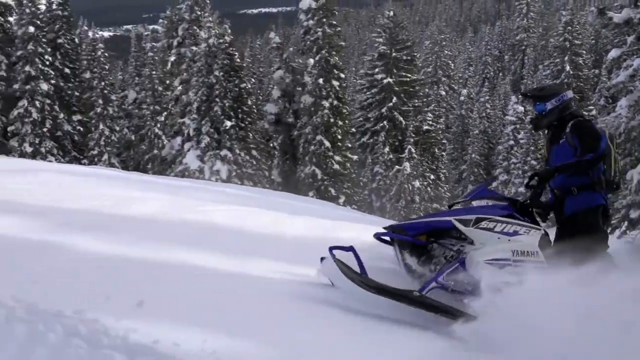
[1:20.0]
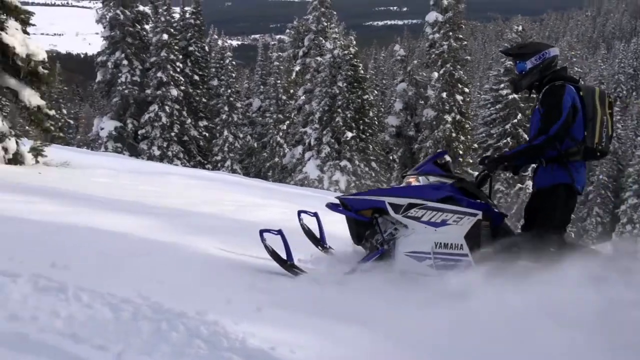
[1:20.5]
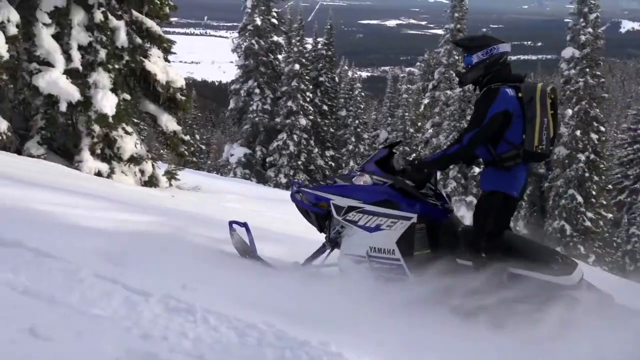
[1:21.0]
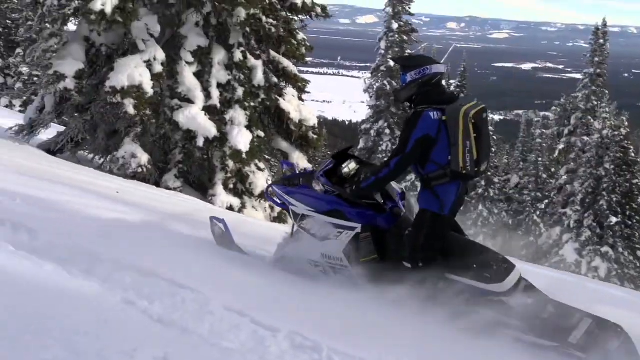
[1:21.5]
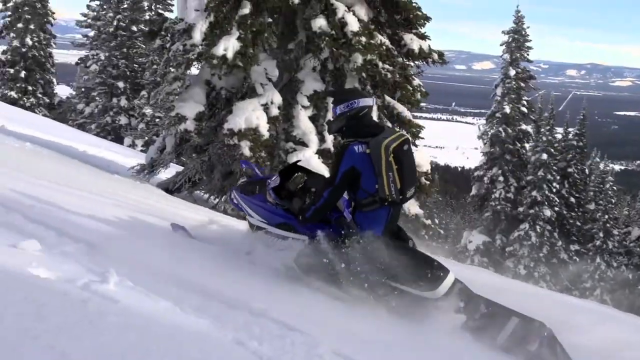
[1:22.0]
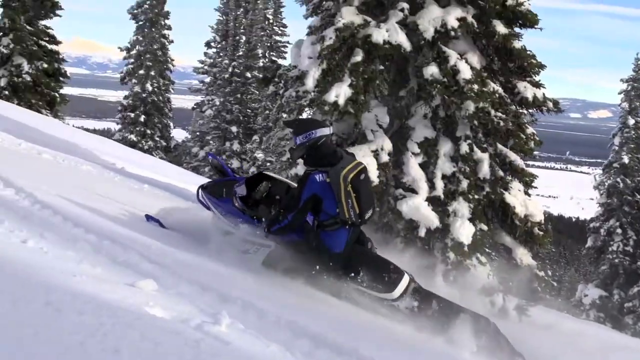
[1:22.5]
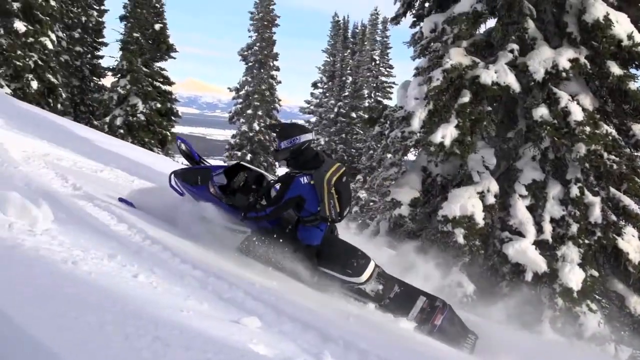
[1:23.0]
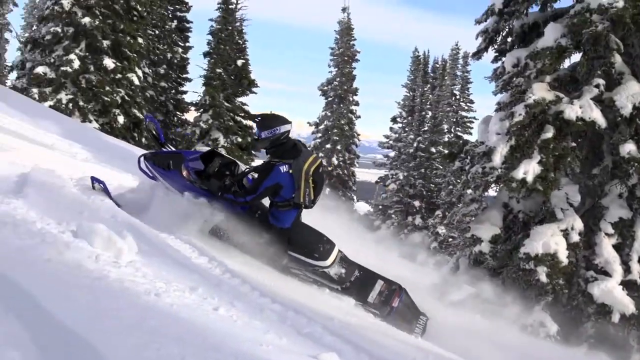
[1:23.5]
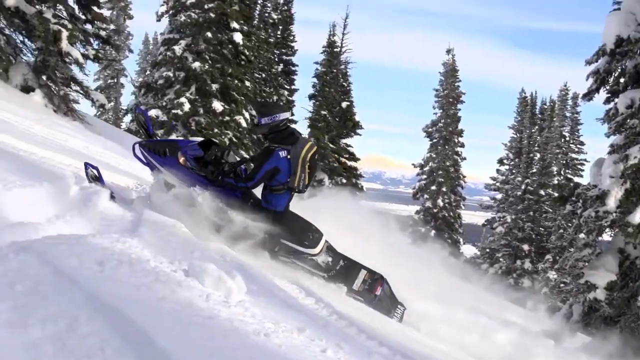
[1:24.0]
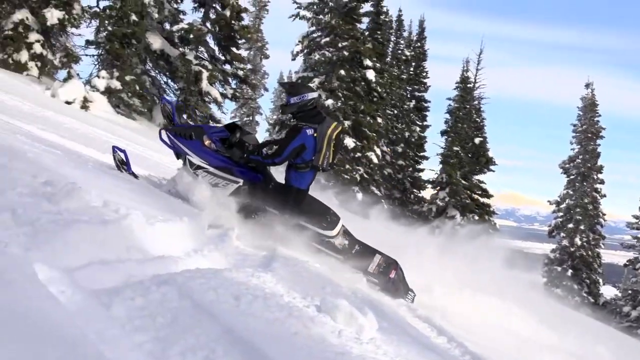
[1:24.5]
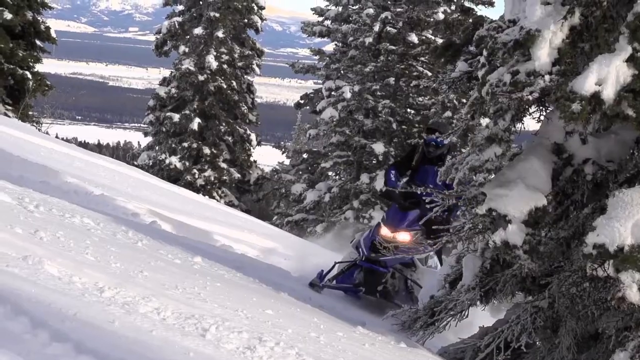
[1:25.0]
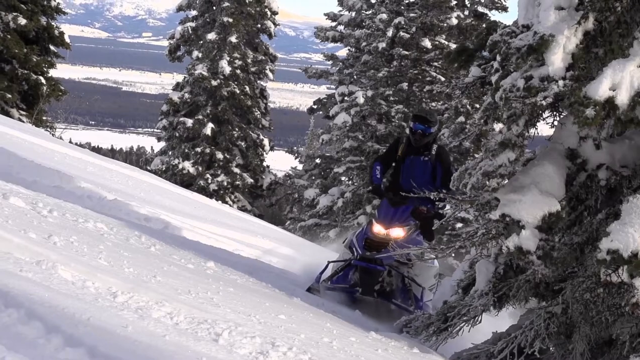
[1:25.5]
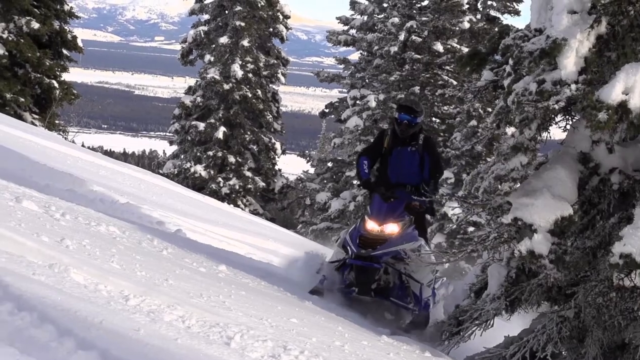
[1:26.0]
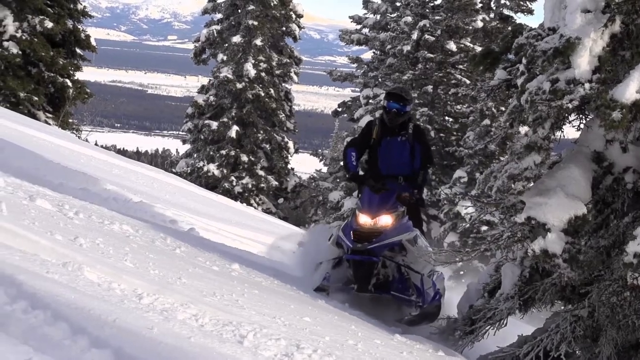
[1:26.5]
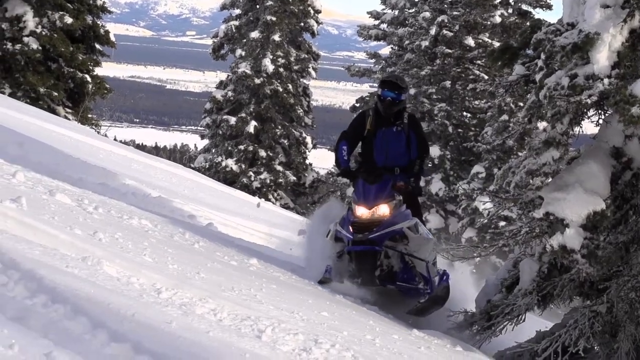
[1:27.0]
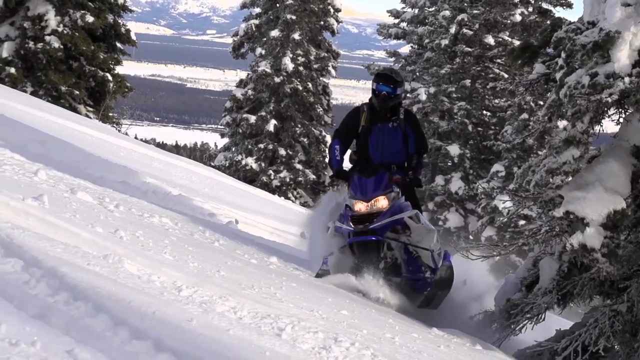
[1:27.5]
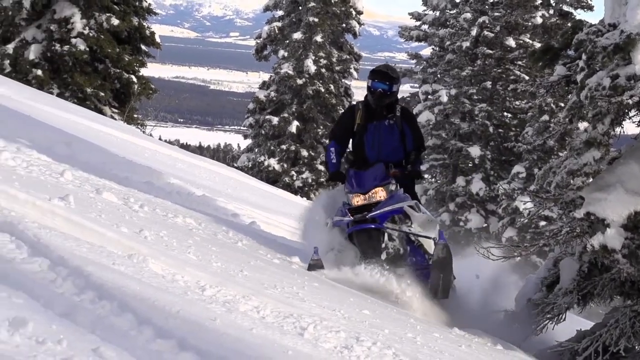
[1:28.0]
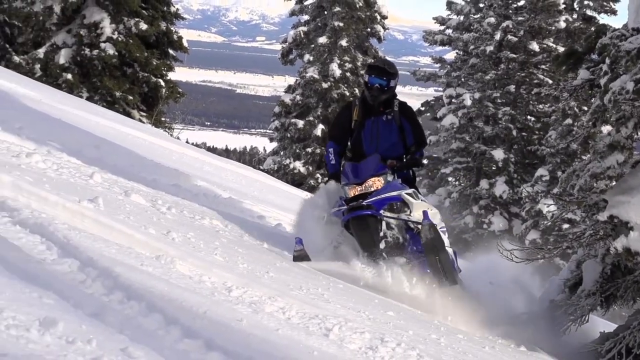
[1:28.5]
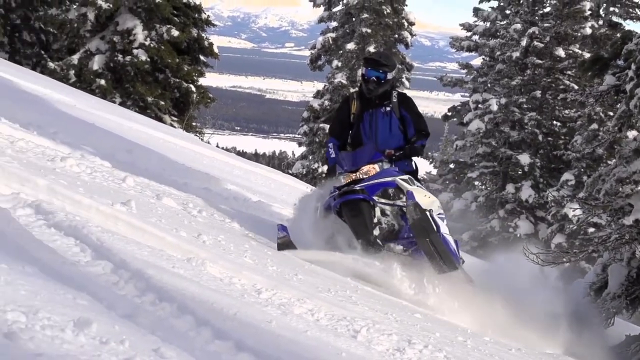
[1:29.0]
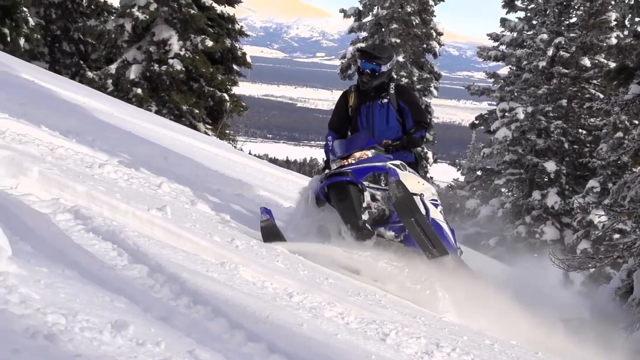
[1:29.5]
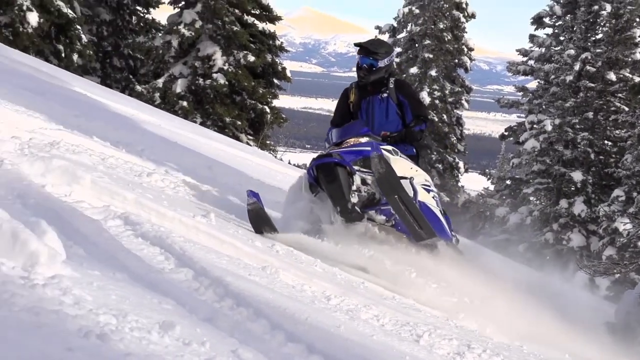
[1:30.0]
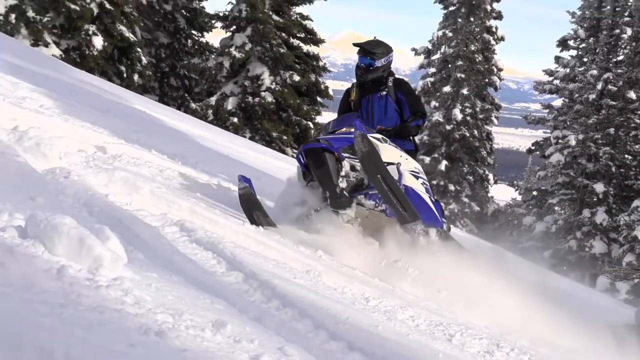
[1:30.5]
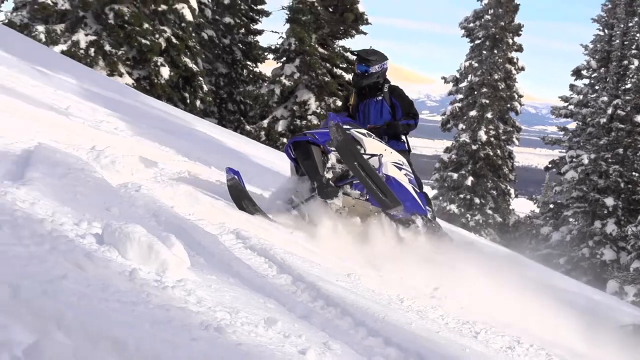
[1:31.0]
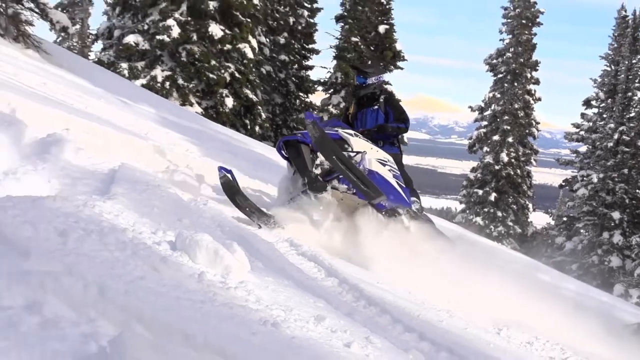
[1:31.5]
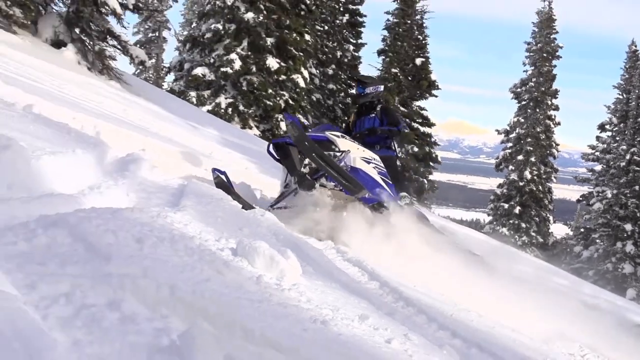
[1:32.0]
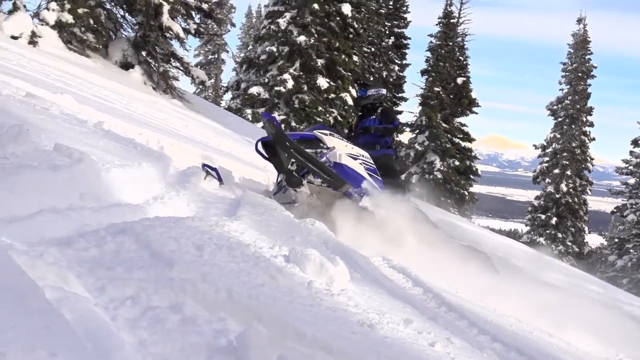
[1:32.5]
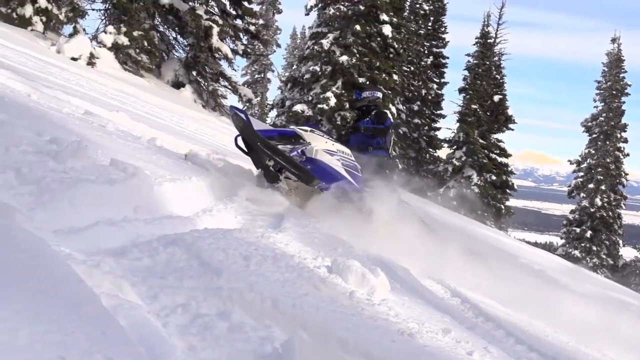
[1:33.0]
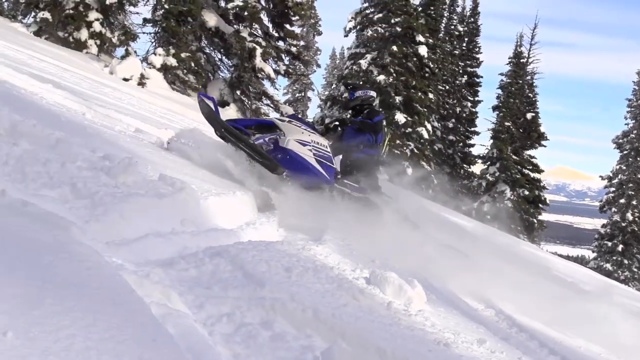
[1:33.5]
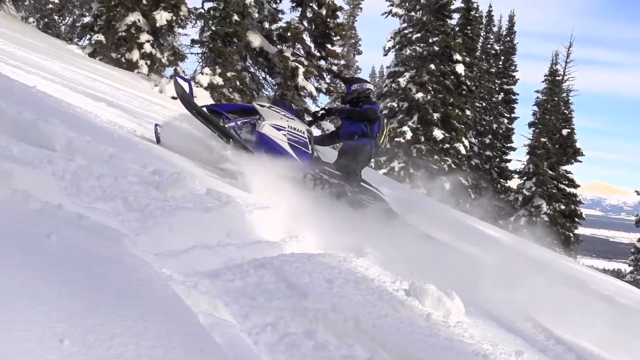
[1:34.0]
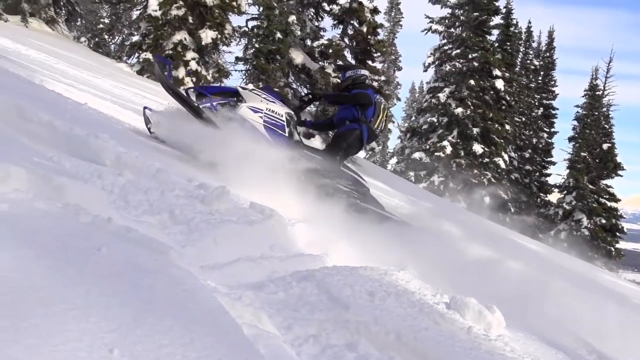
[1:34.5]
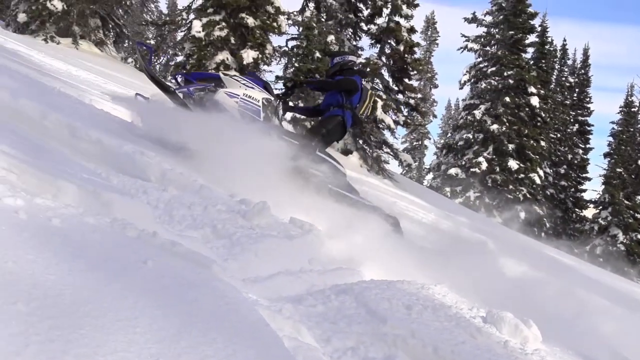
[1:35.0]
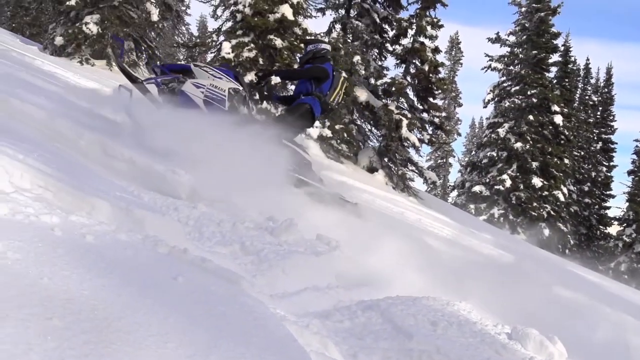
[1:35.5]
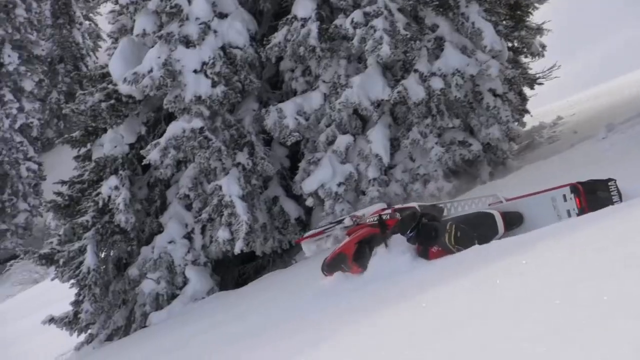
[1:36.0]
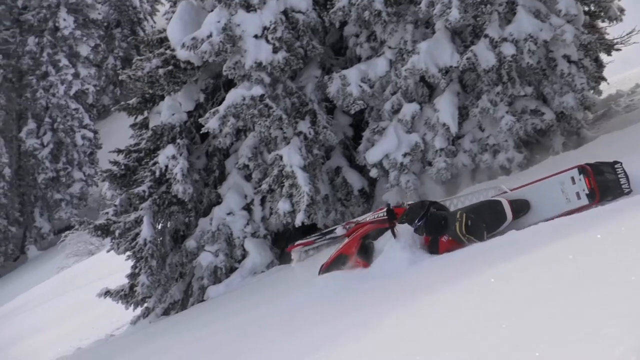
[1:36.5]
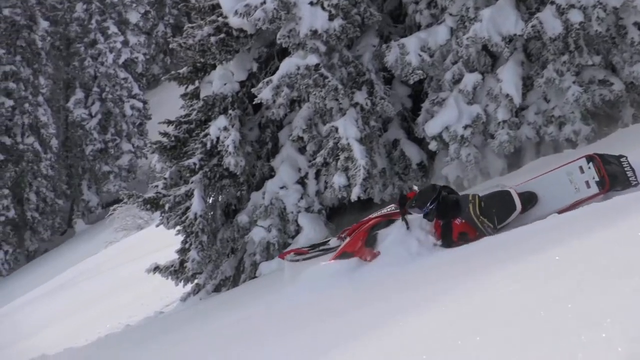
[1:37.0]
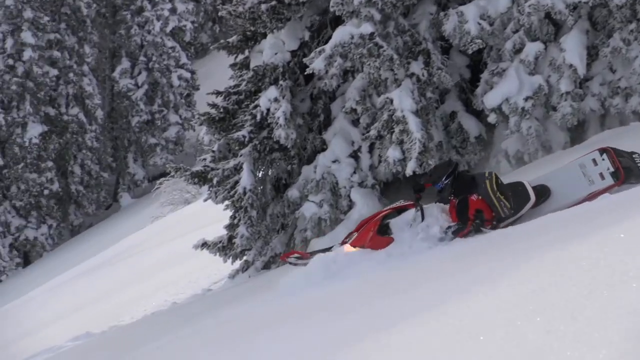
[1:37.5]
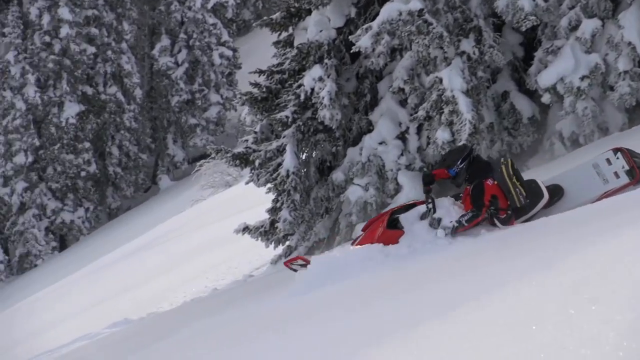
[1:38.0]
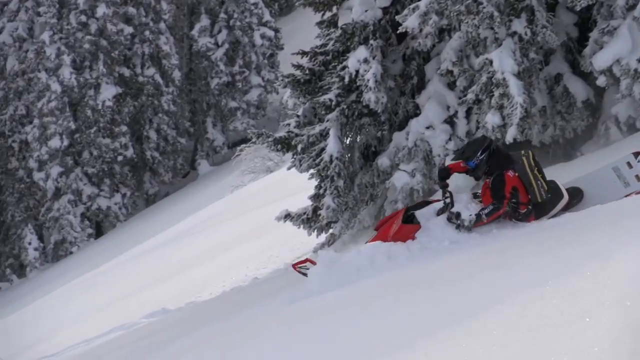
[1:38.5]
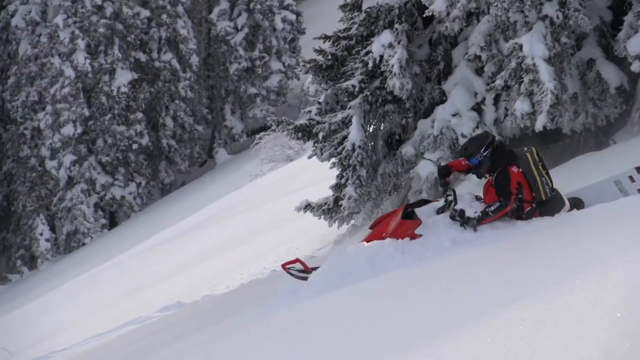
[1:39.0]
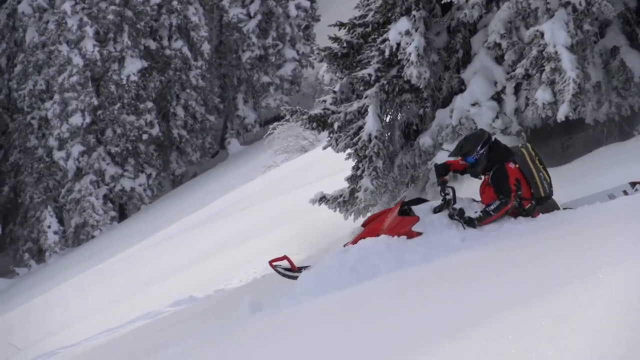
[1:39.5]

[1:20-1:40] A snow-covered mountainside or hillside appears, apparently a mountainside, with a plethora of evergreen trees in the background, many with snow on them. In the bottom right corner of the screen is a white and blue snowmobile with black skis on the front. Its rider wears black pants, a black and blue top, a black helmet, and goggles with a white or silver strap going behind the helmet, apparently to help with sun glare. He also wears a backpack. He rides up the hill or mountain, does a left turn, then tilts to the right as he continues up. The scene then switches to another snowmobile, red and white in color, ridden by a rider in a red and black top and a black helmet. Where the sky is visible, it looks partly cloudy, and it looks very cold.